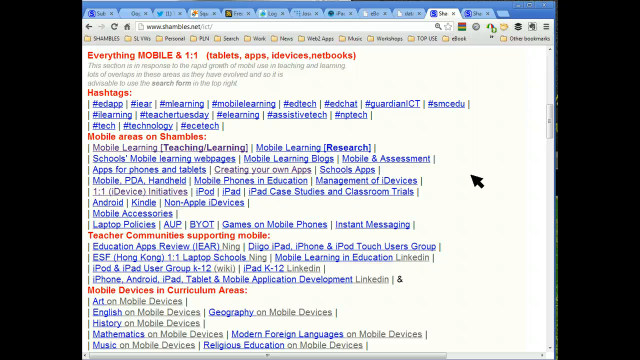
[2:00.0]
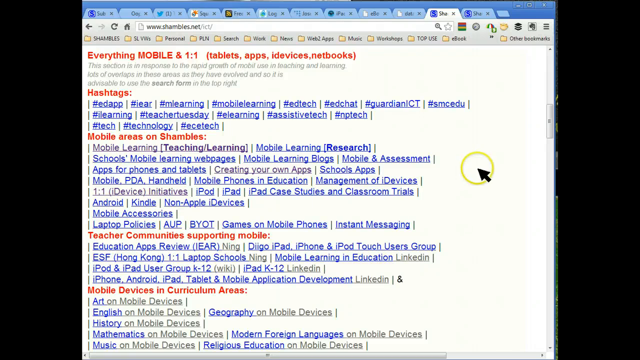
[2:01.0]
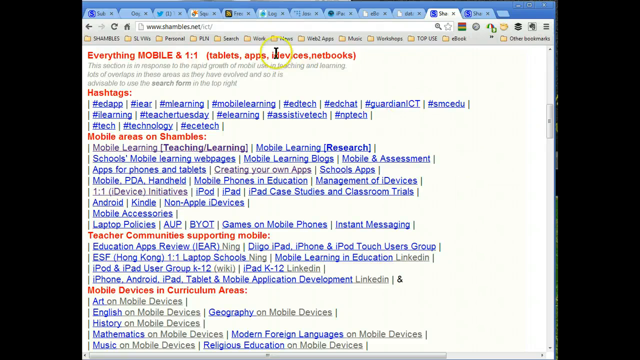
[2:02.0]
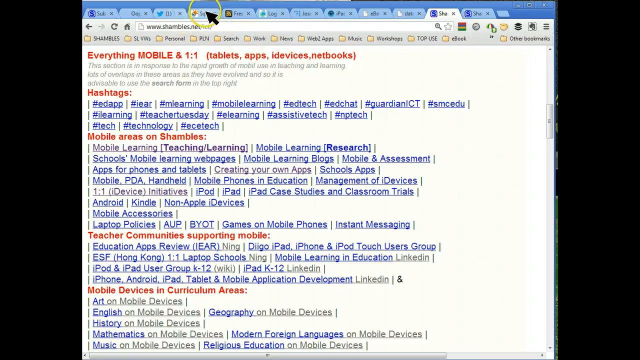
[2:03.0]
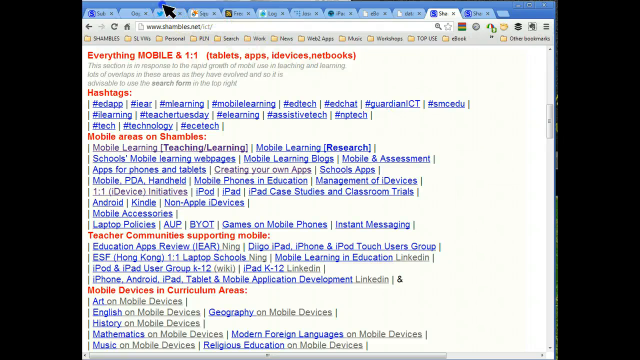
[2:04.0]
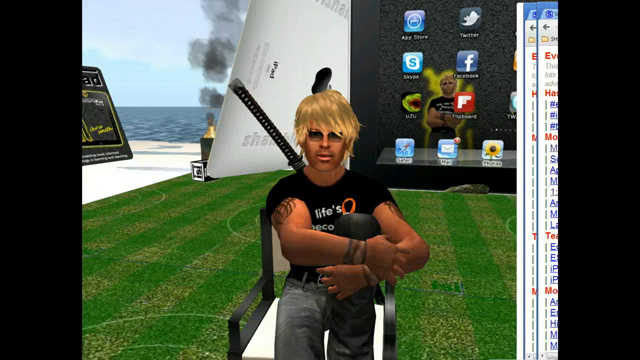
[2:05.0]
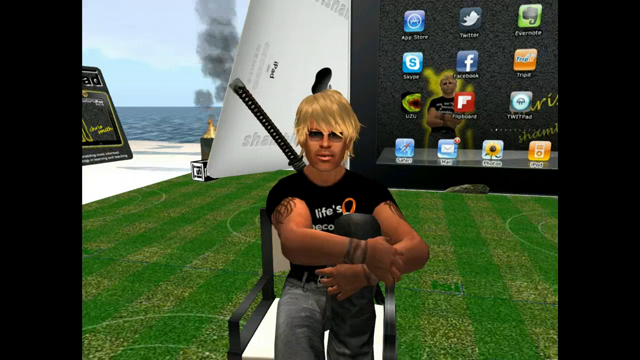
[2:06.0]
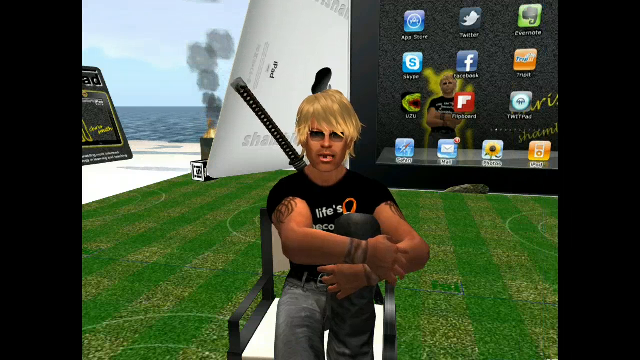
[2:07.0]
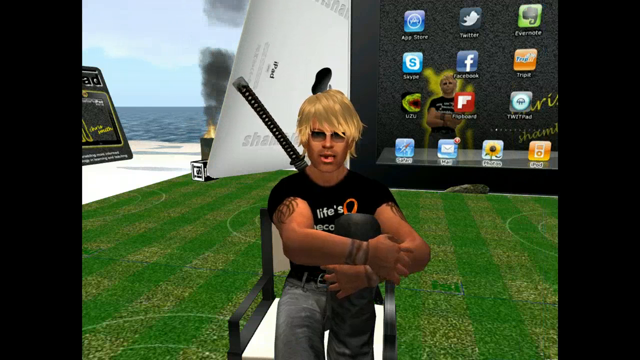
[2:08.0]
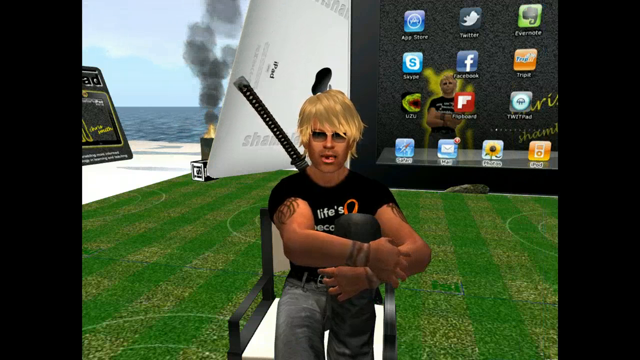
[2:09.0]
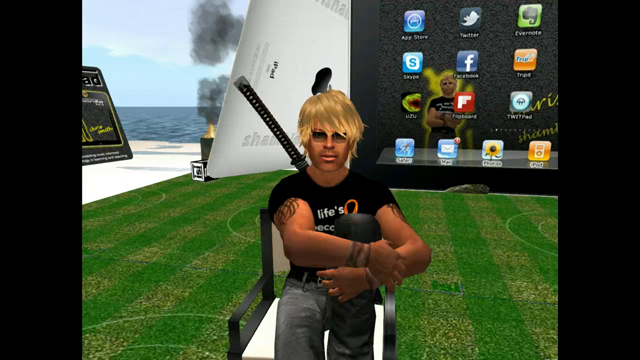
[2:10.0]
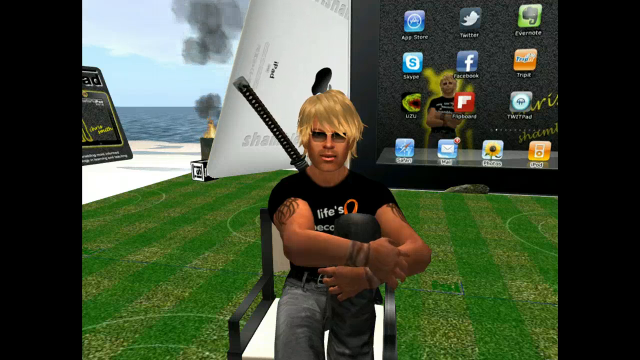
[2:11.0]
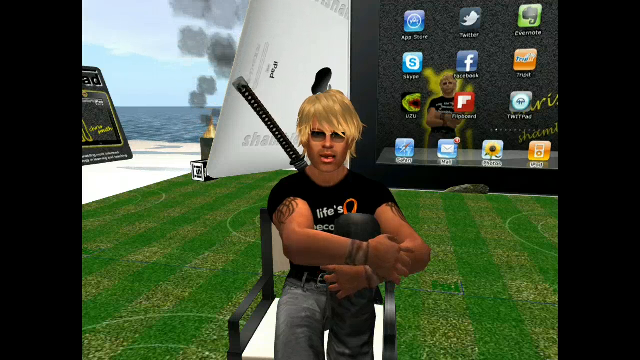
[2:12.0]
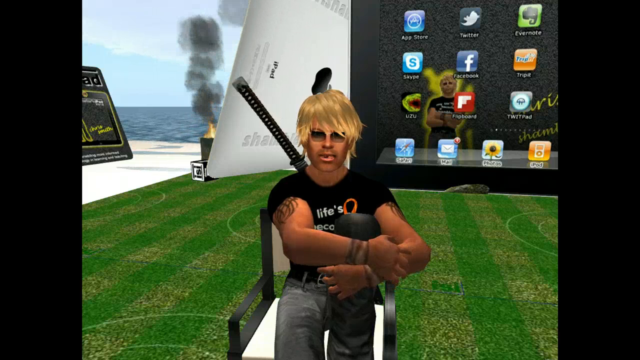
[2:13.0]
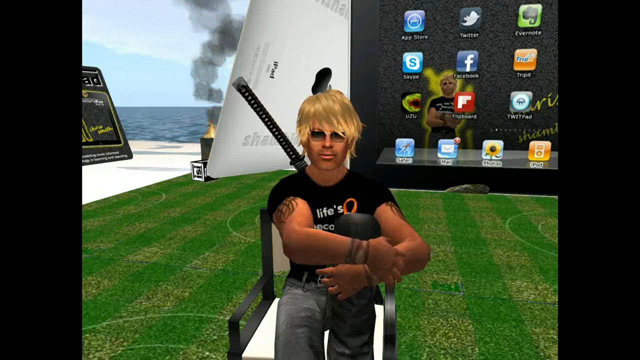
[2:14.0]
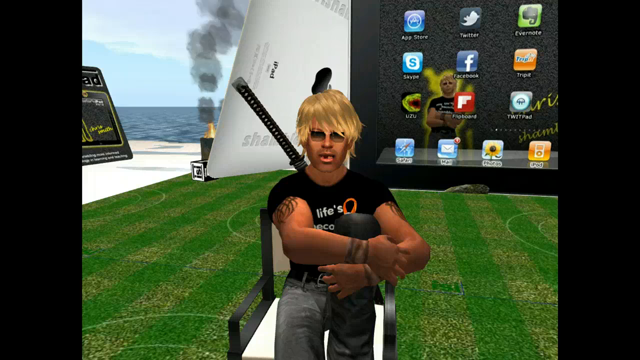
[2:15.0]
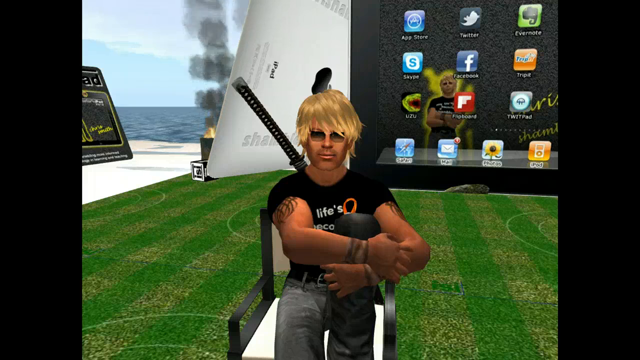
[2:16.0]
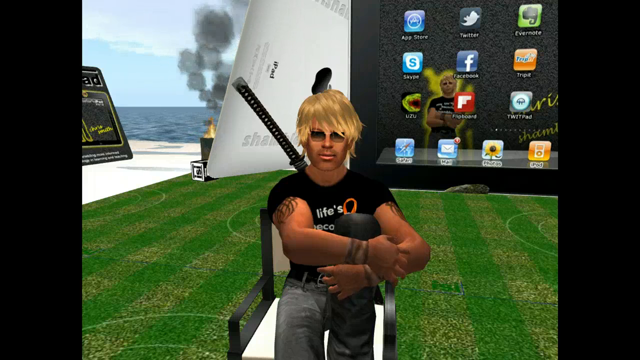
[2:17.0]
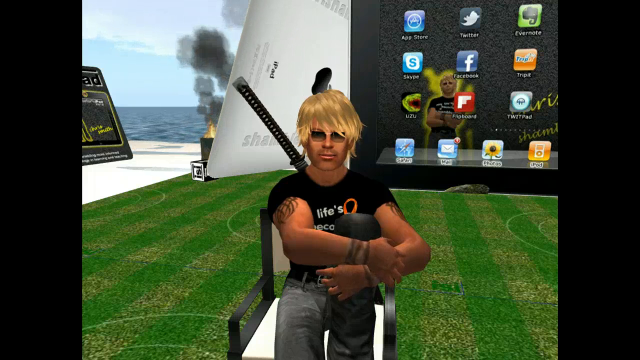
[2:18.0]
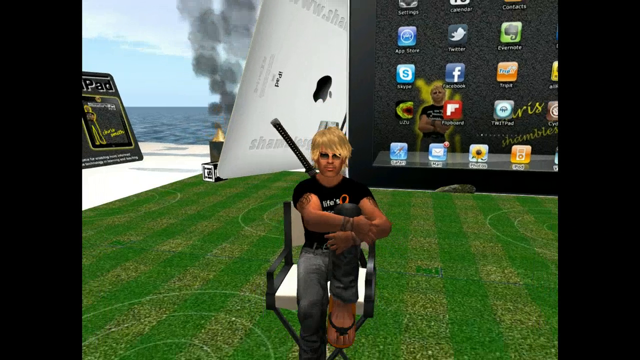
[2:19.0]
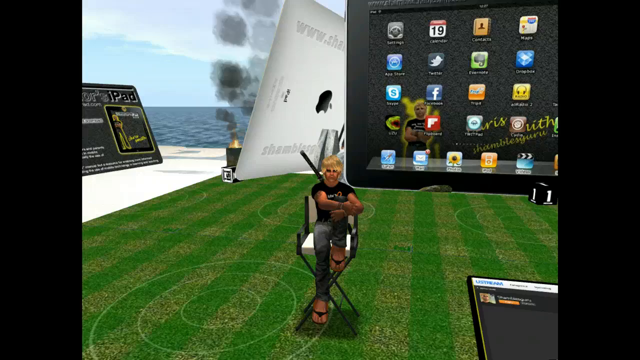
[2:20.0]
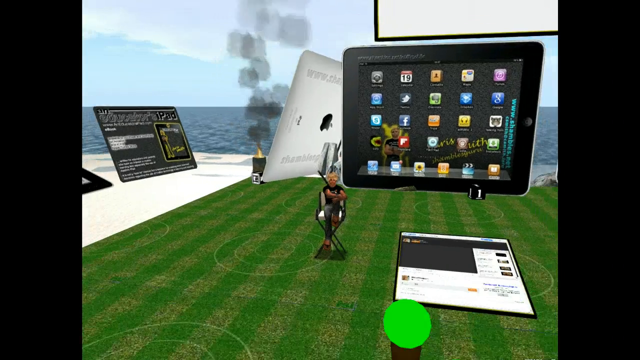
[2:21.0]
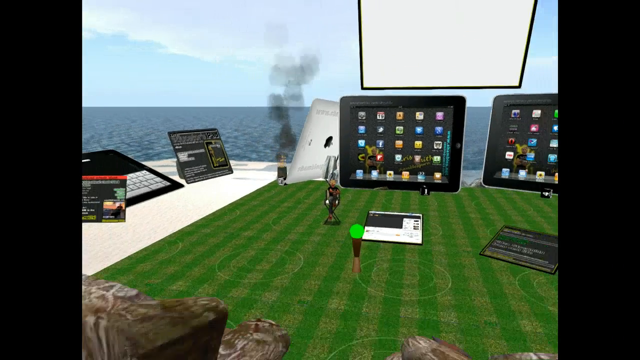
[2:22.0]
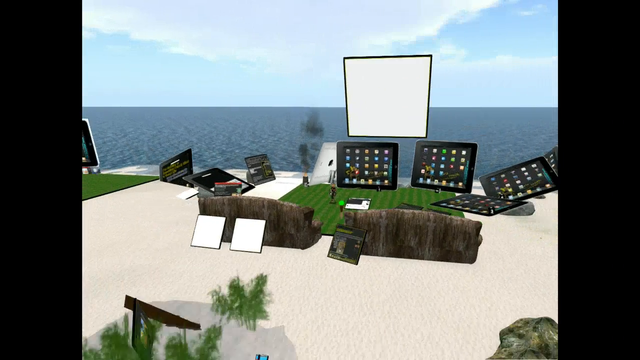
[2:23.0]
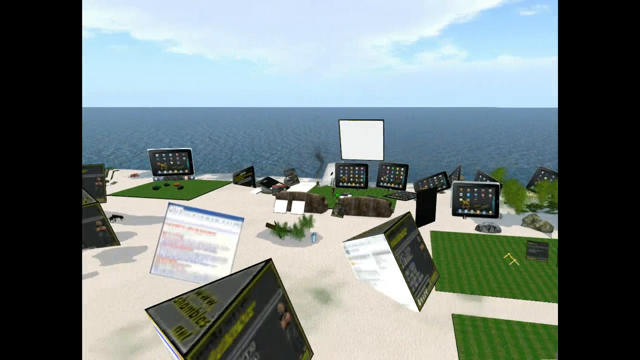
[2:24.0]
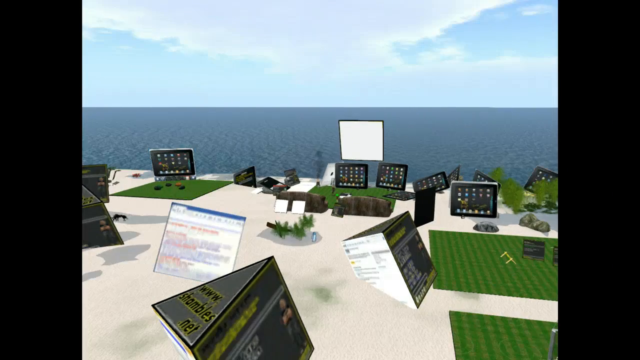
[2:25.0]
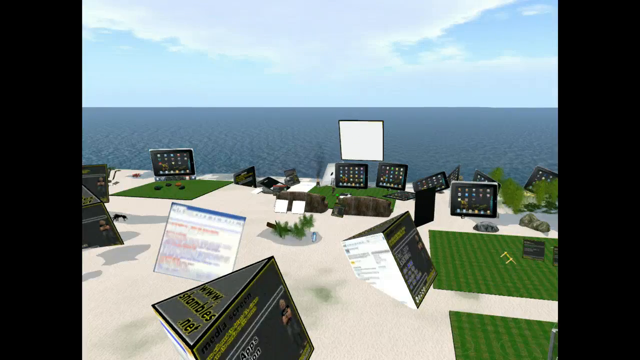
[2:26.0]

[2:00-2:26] The place is fully decorated with iPads. A guy sits on a black chair holding his legs, one on the chair and one down. He has short blonde hair and wears a black t-shirt and black jeans. There are two sofas in front of him. The video appears to be an ad for iPads, since there are iPads all over the place. The back of another iPad with its logo is visible. The boy carries a long black stick on his back. His lips move, apparently as he talks. The video then goes to a page reading "Twist", where the mouse moves all over looking for a website to buy the iPad. The website is found, and there is a link to it. The mouse keeps clicking and eventually ends up at information and communication technology. The camera zooms out from where the boy sits, revealing an environment full of iPads and sofas, with green grass; it looks like a very fancy place. The boy wears a black t-shirt, black jeans and a black belt, has blonde hair, and has one leg on the chair and one on the ground. The camera rotates, showing his back and all his sides, and a very big stick is attached to the chair he sits on. The video then goes to a page where they look for the website to buy the iPad.